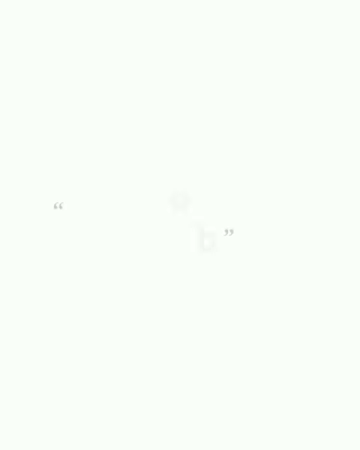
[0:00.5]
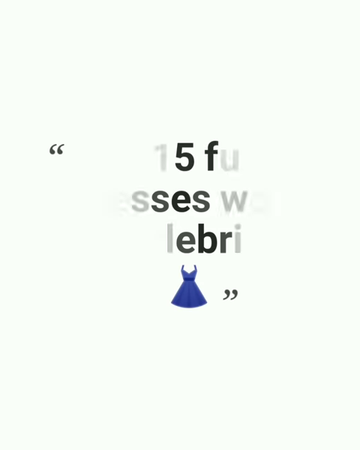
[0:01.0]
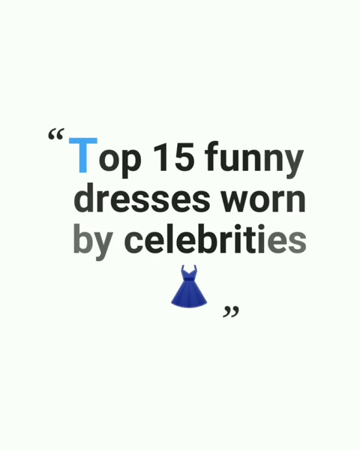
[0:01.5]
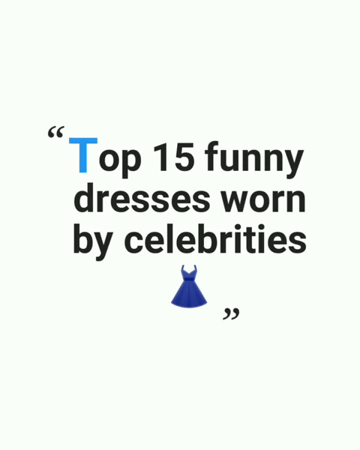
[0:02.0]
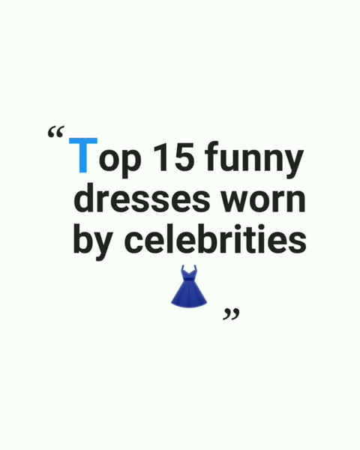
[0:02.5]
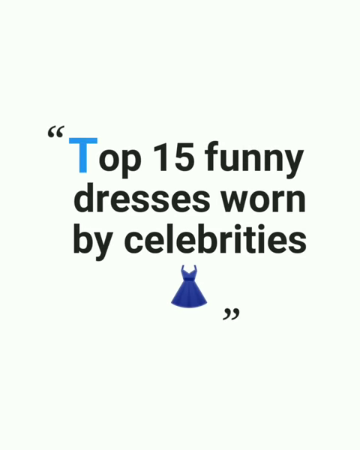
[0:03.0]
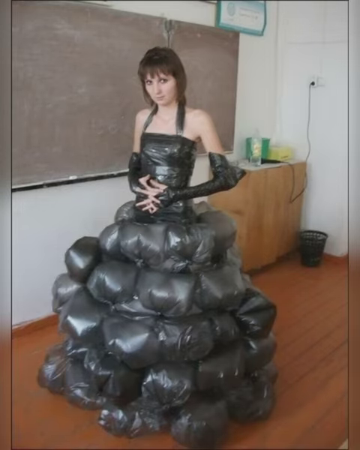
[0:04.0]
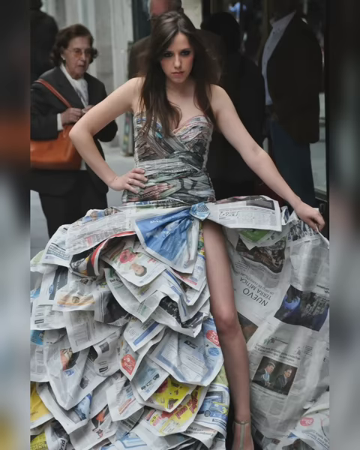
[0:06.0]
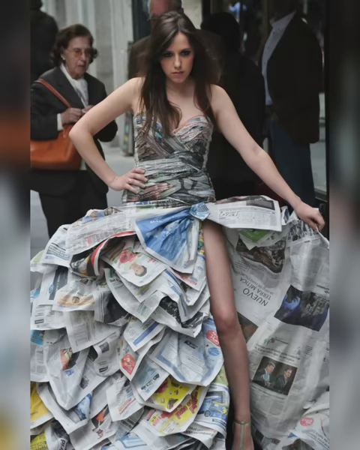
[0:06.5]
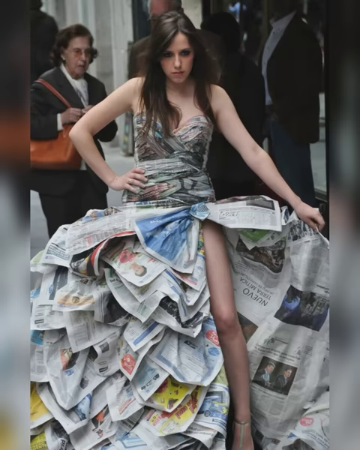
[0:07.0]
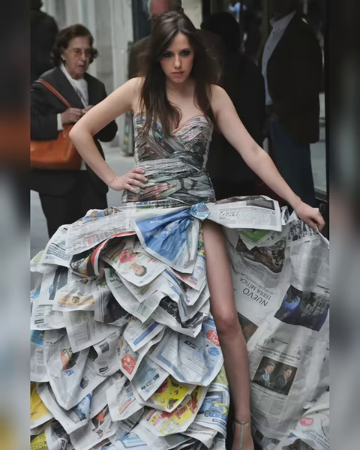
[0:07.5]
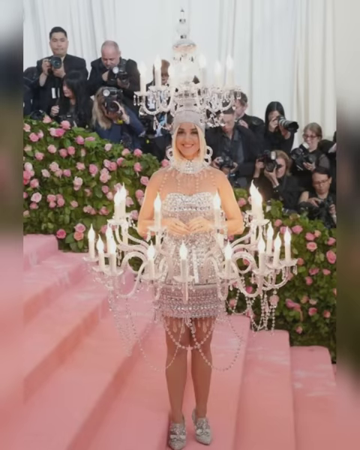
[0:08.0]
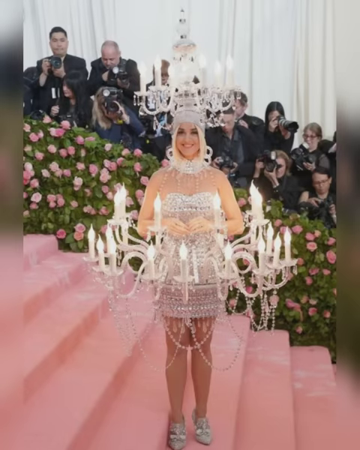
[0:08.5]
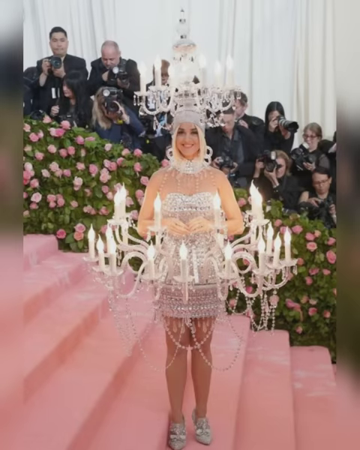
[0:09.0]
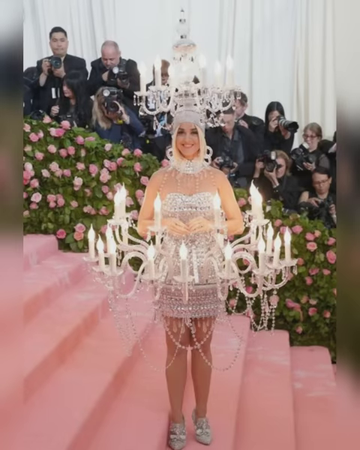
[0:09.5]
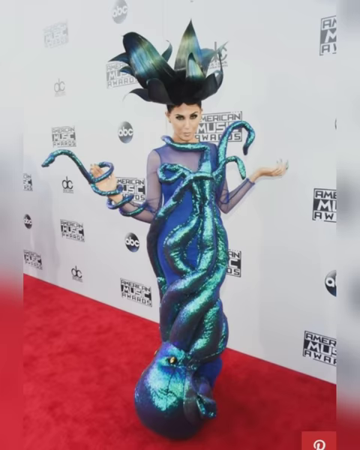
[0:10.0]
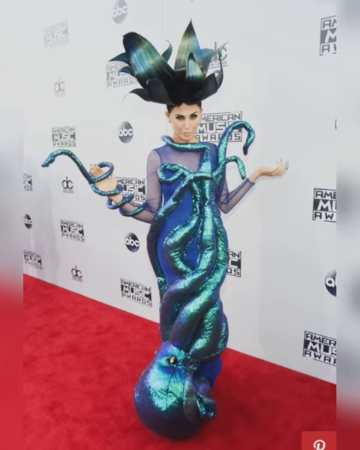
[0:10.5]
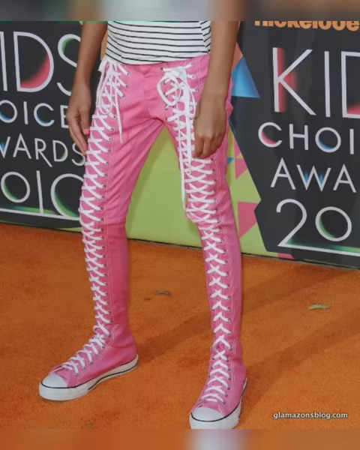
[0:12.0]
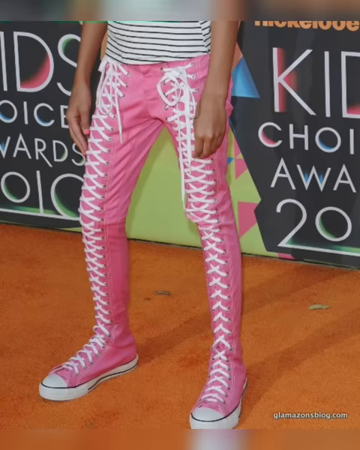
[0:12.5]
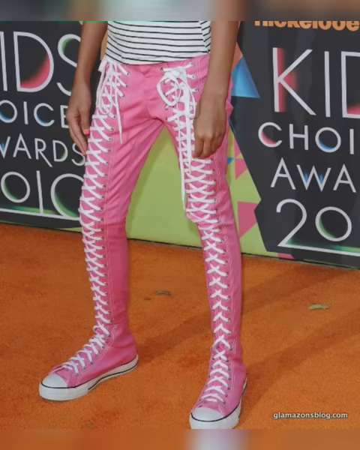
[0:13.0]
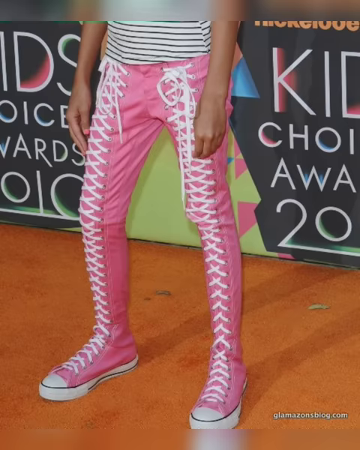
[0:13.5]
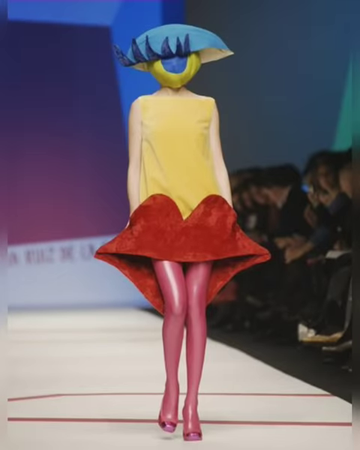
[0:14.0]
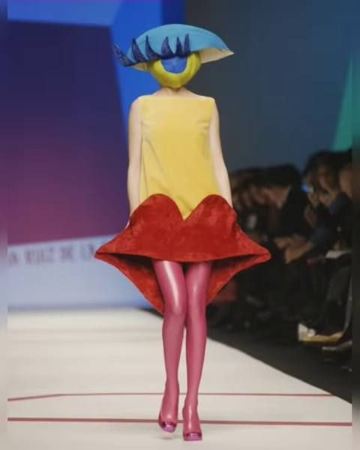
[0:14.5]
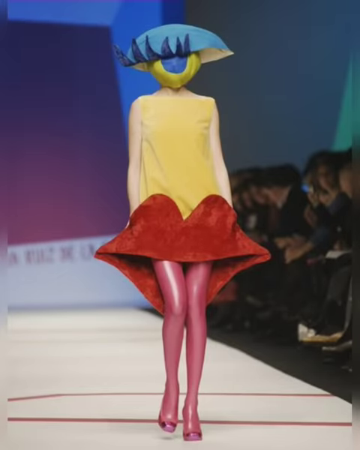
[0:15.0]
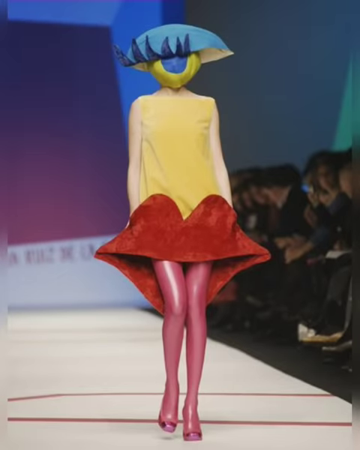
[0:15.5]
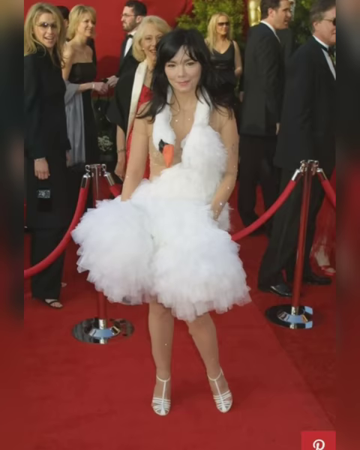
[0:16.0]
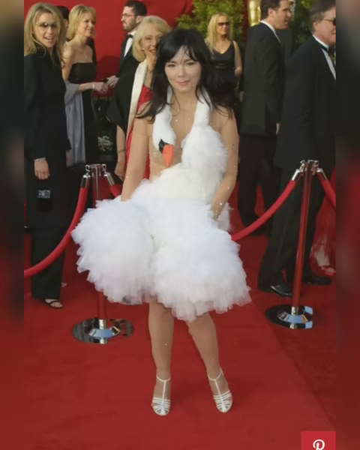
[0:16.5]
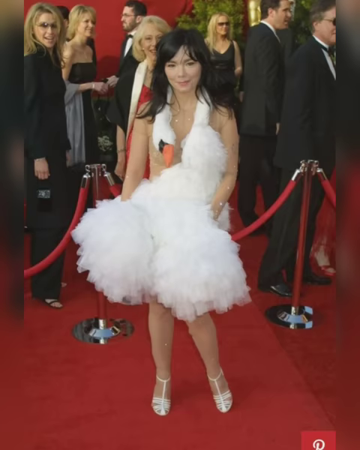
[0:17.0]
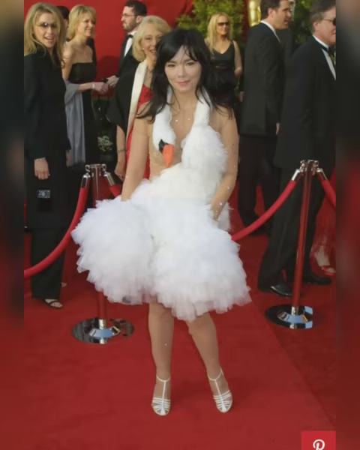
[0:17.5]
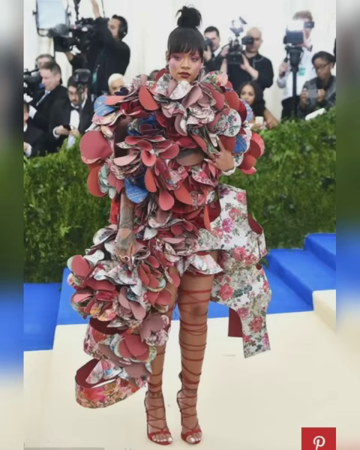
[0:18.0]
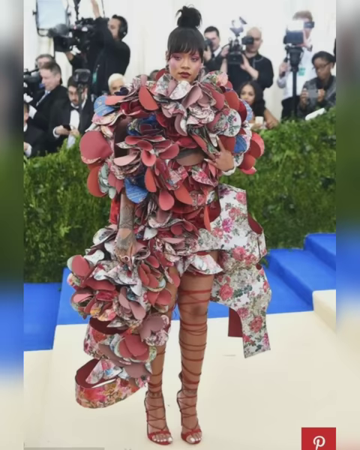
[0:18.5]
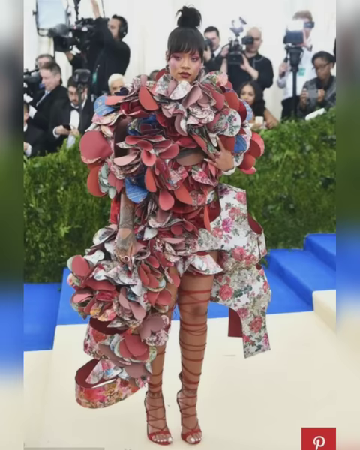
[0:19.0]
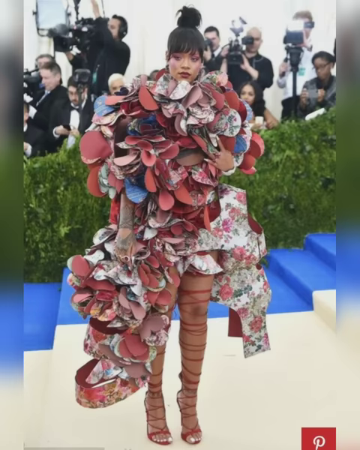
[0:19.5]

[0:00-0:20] The video opens with the text "top ten funny dresses worn by celebrities" in quotation marks, along with a picture of a little blue dress. Pictures follow of different women wearing somewhat outlandish dresses. The first looks like a bunch of poofed-up black trash bags. Next, someone wears a dress that looks like it is made of newspapers. A woman who appears to be on the steps of the Met Gala wears a dress made of chandeliers. Someone on the red carpet wears a somewhat Medusa-like dress. Pink pants that are all laced up appear, and someone wears a dress on the runway. Someone on the red carpet wears a dress that looks like a swan, followed by another crazy-looking dress that seems to be made of paper or something similar.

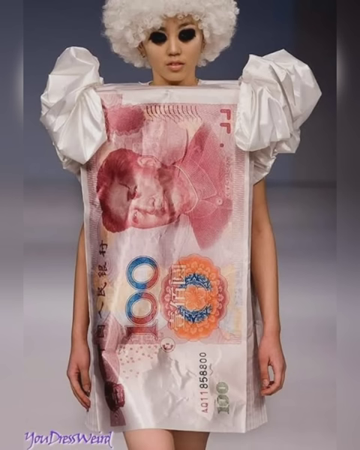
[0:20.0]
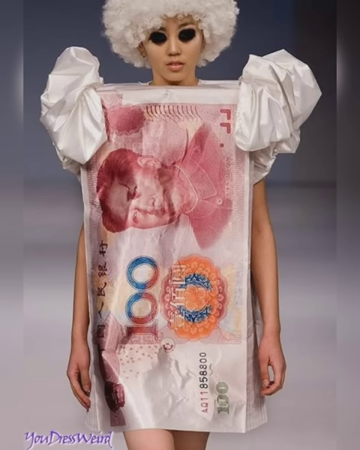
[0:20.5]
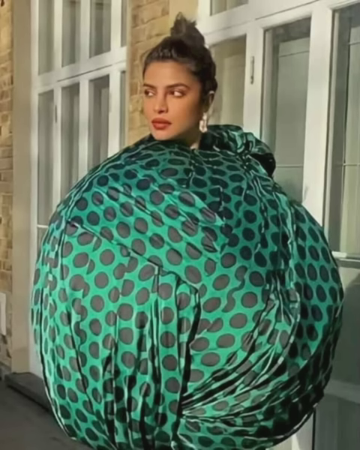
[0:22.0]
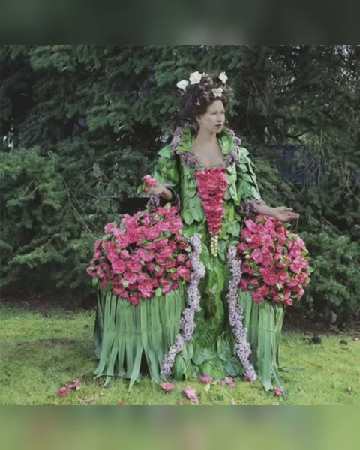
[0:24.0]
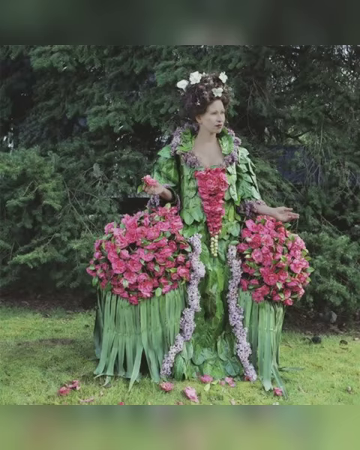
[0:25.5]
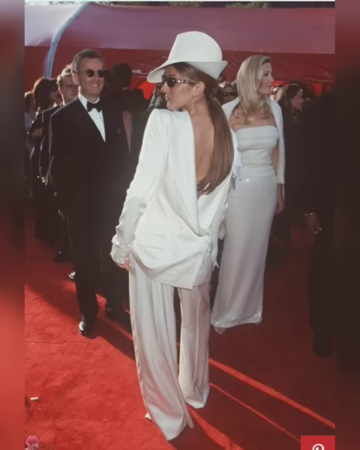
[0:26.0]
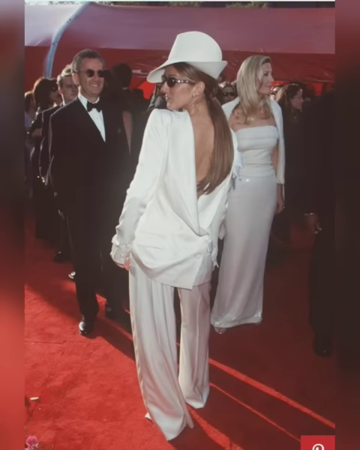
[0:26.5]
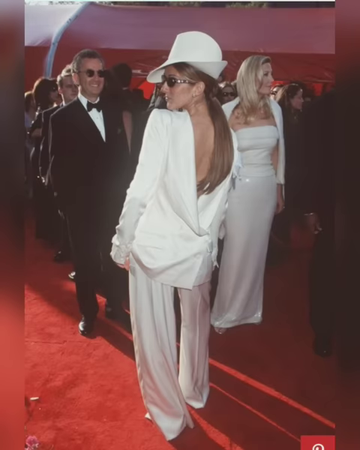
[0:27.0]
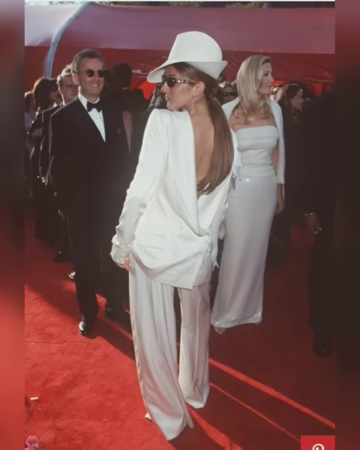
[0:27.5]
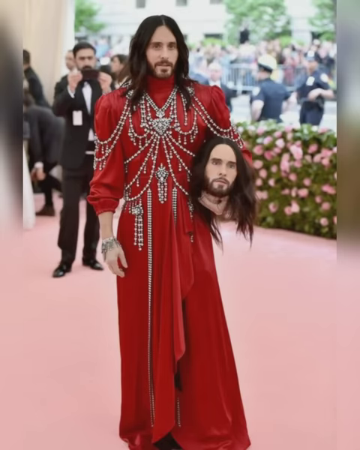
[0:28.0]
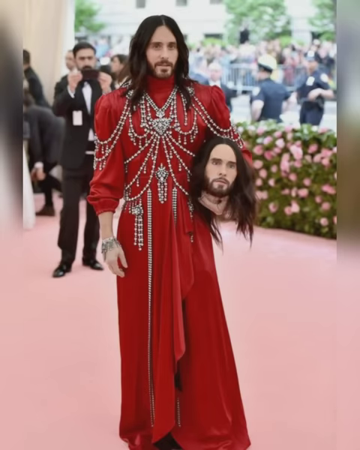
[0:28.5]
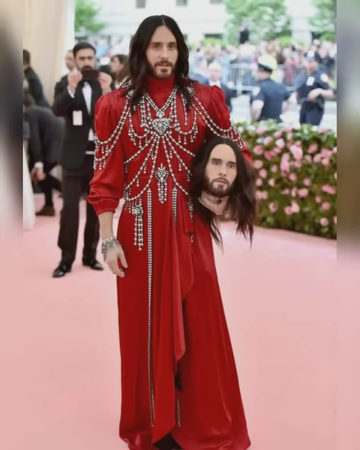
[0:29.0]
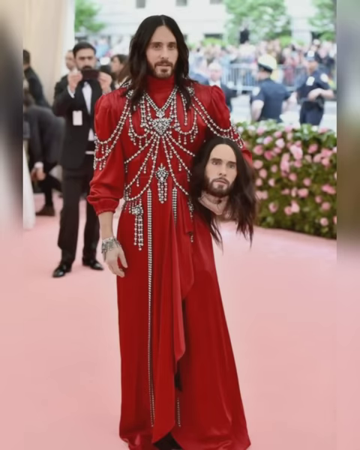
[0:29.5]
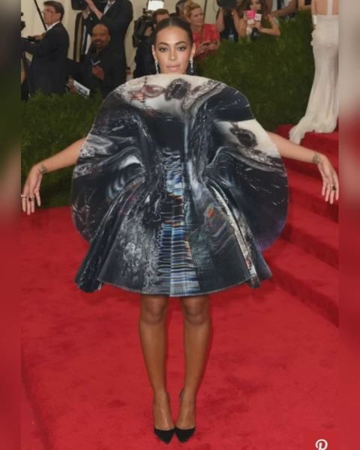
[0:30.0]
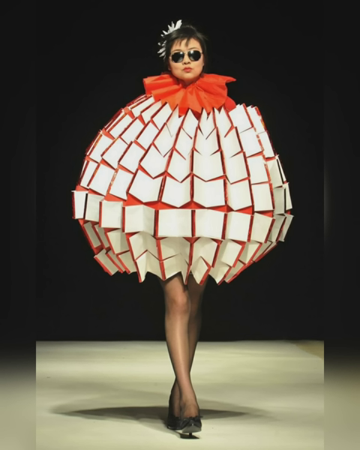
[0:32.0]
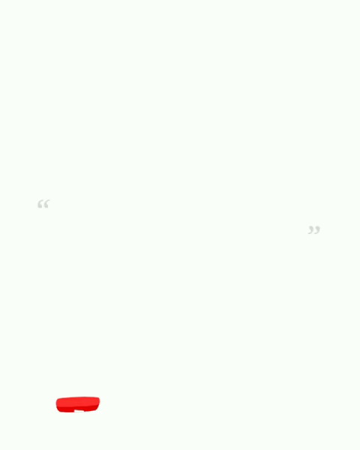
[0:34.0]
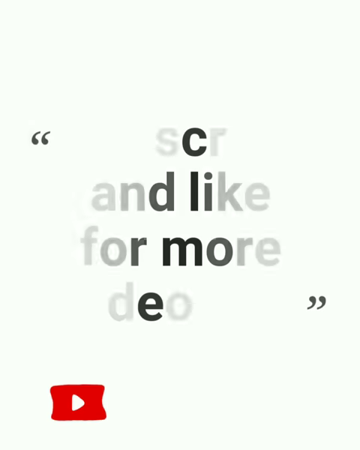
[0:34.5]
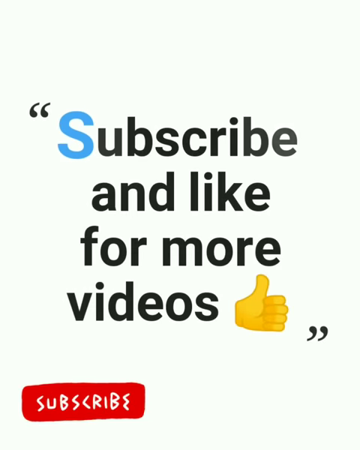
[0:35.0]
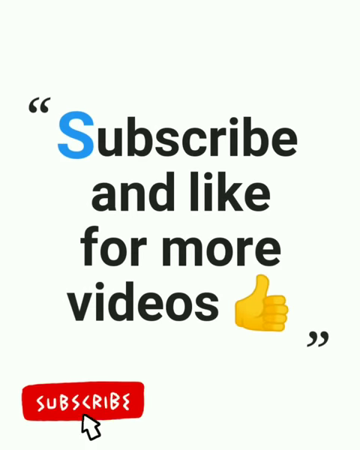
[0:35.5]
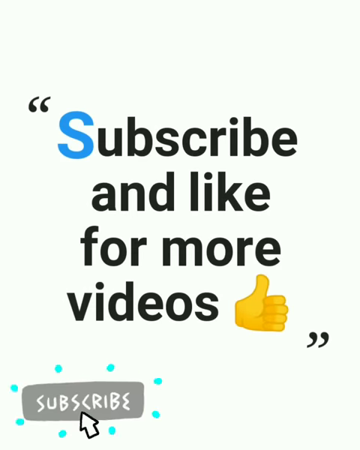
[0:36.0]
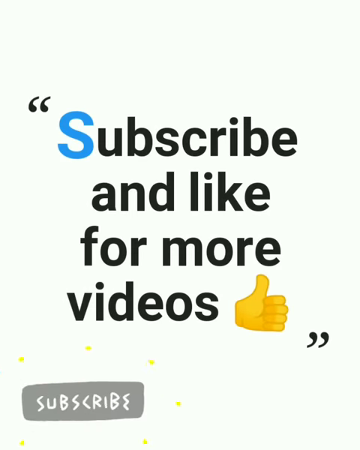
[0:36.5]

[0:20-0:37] More outfits in various outlandish styles are shown. The first dress looks like it is made of money, and the second is a big ball. The third is worn by a woman in front of a tree, in a dress that looks like flowers. A woman on the red carpet wears what looks like a suit with a white hat. A man wears a red dress and holds a head in his hand. Another dress appears on a red carpet, then a big ball dress on a runway. At the end, a white screen shows black text in quotation marks reading "subscribe and like for more videos," with an image of a yellow thumbs-up sign and a small red subscribe button with an arrow at the bottom of the screen.